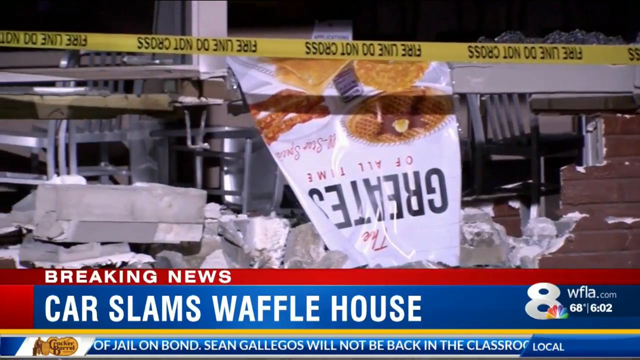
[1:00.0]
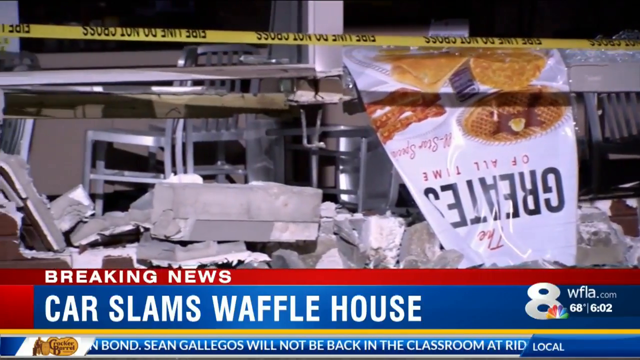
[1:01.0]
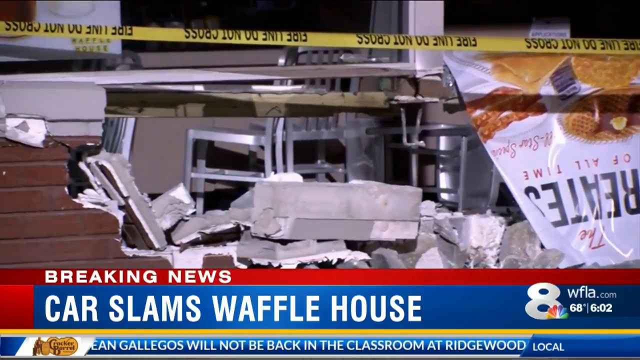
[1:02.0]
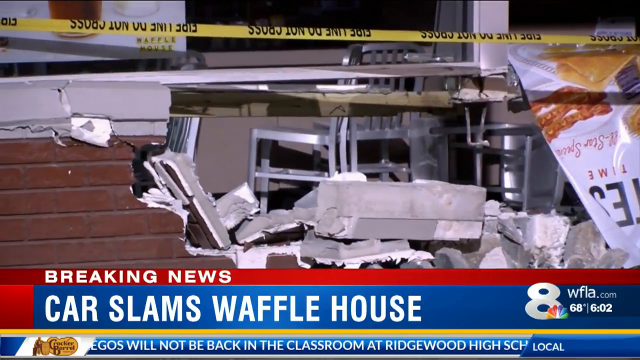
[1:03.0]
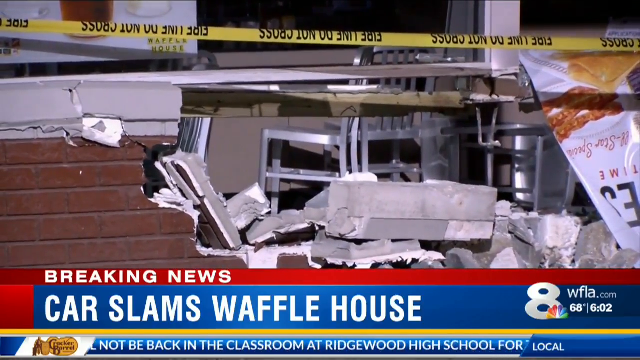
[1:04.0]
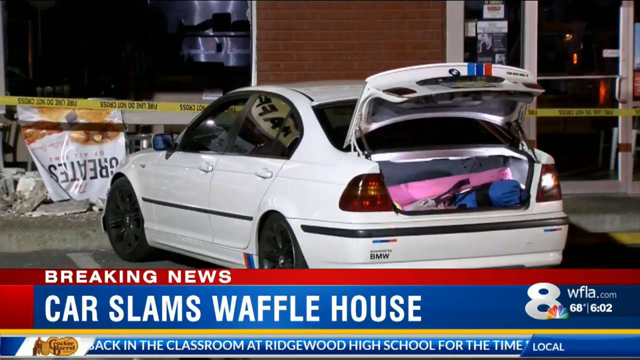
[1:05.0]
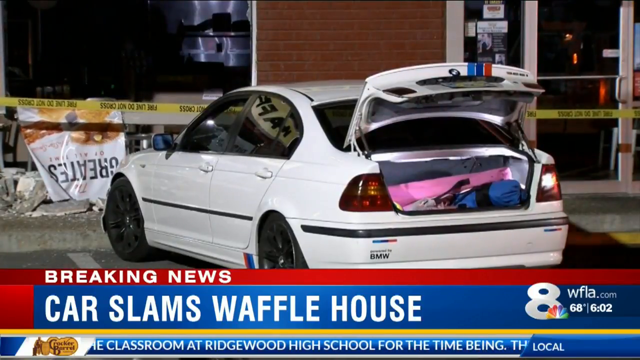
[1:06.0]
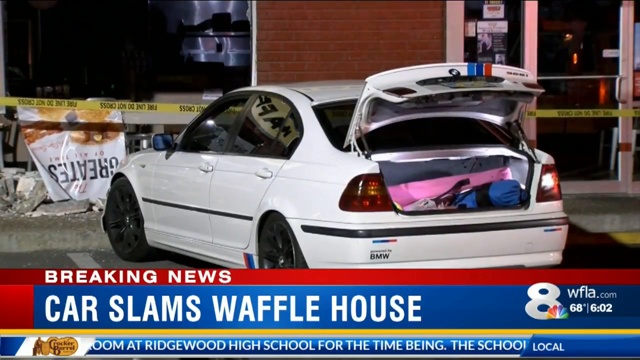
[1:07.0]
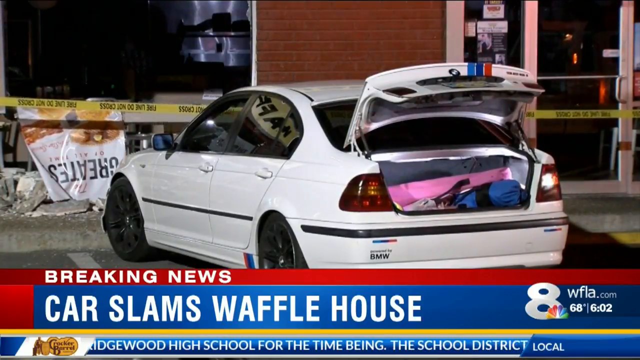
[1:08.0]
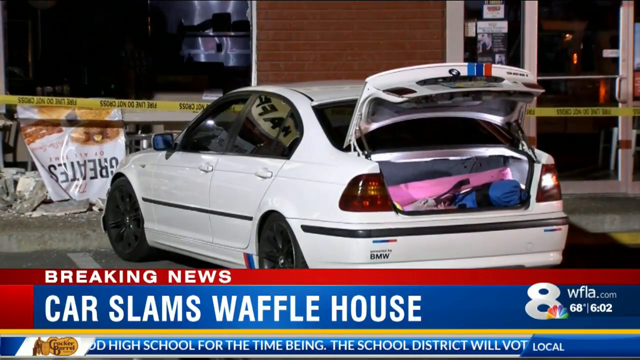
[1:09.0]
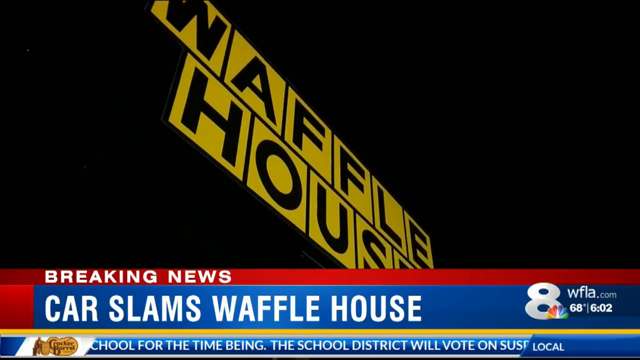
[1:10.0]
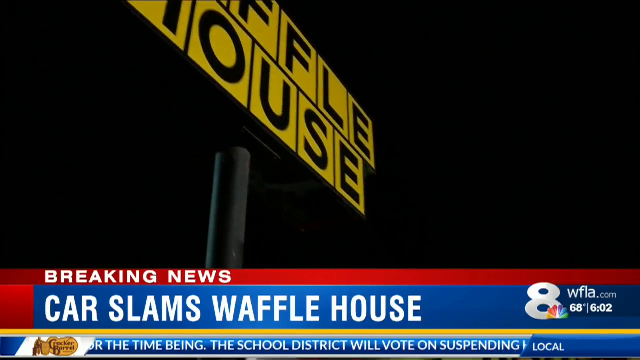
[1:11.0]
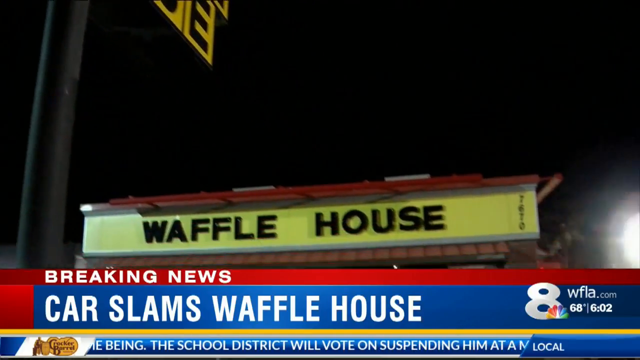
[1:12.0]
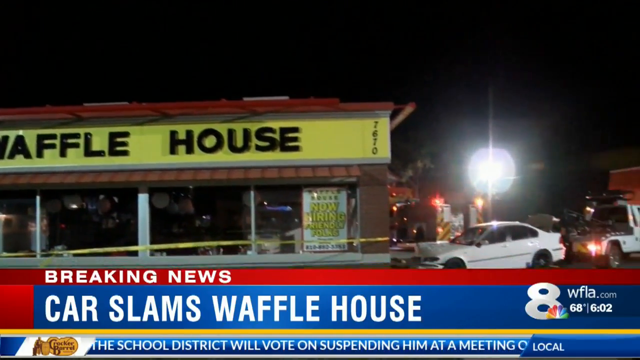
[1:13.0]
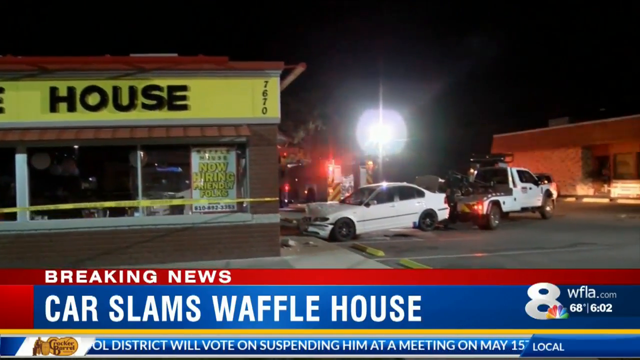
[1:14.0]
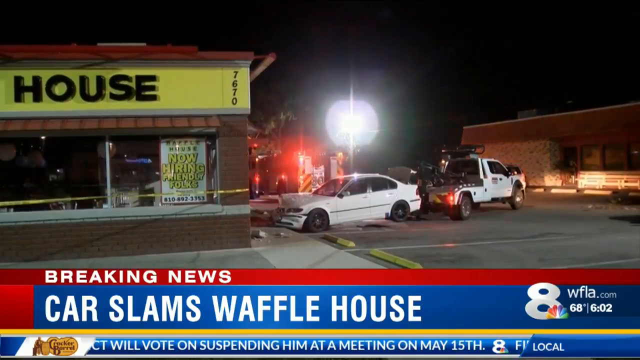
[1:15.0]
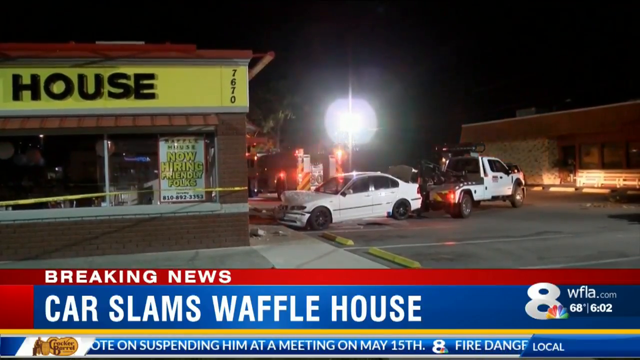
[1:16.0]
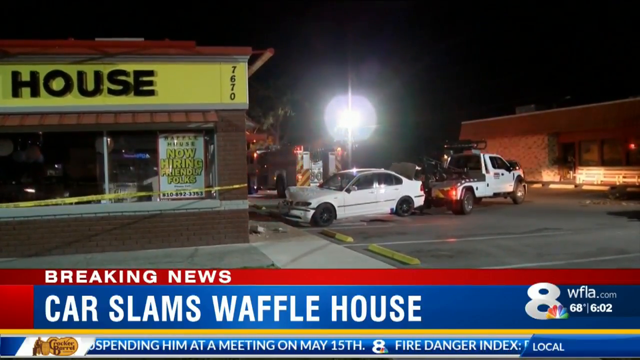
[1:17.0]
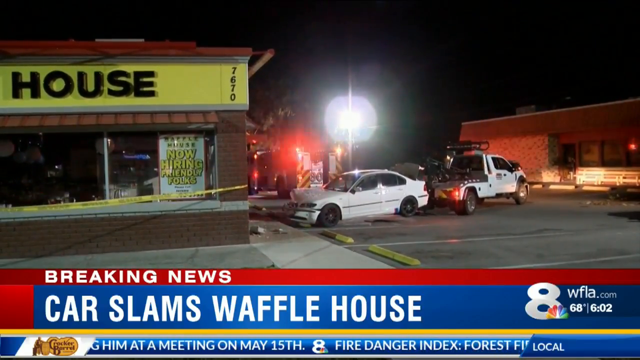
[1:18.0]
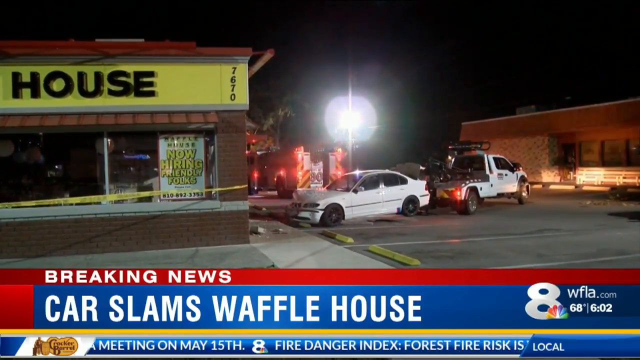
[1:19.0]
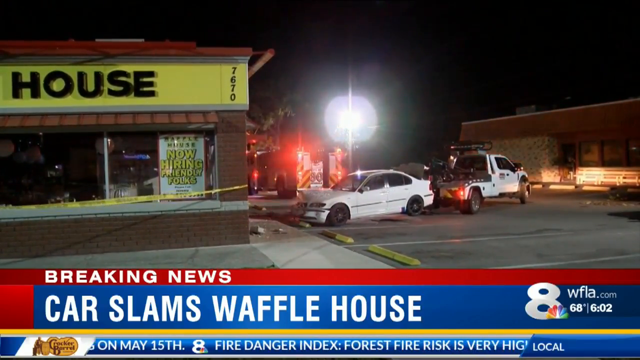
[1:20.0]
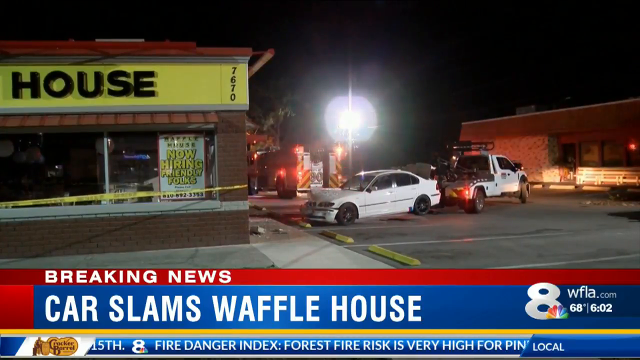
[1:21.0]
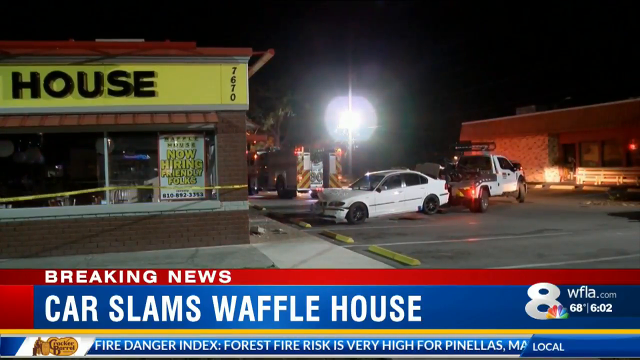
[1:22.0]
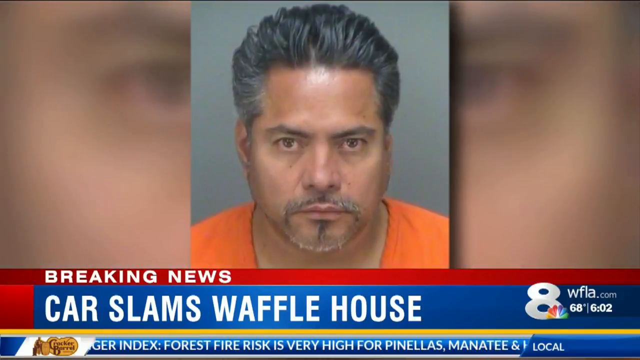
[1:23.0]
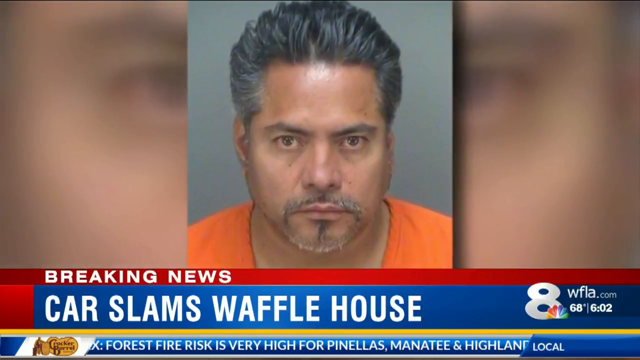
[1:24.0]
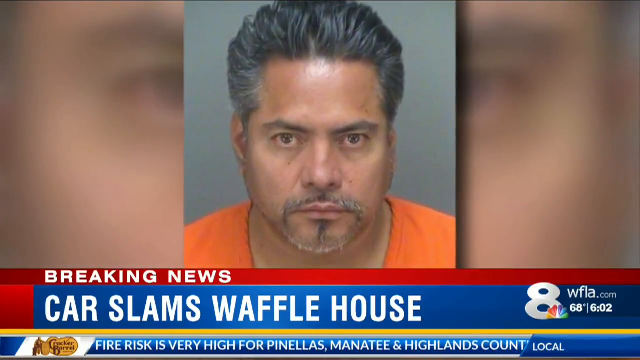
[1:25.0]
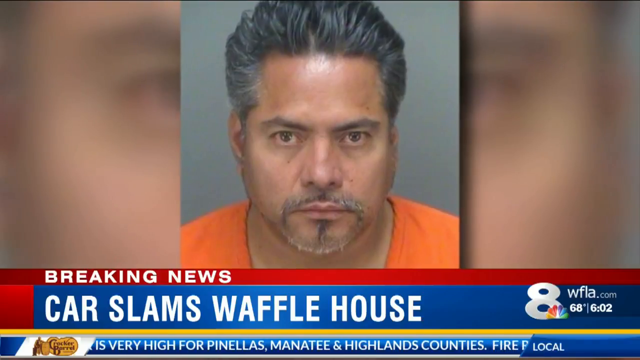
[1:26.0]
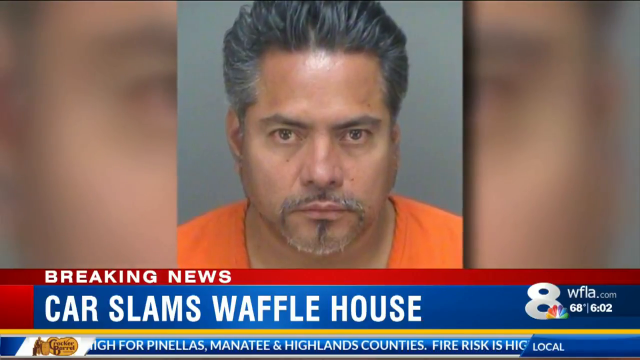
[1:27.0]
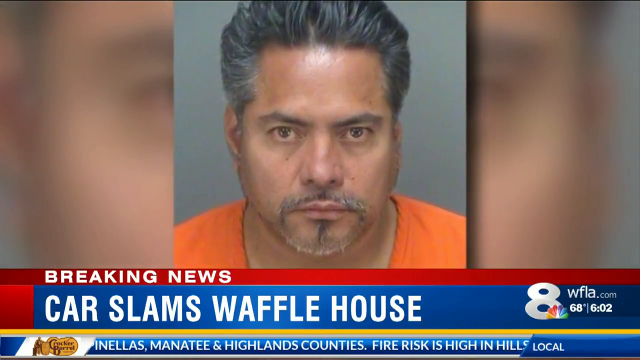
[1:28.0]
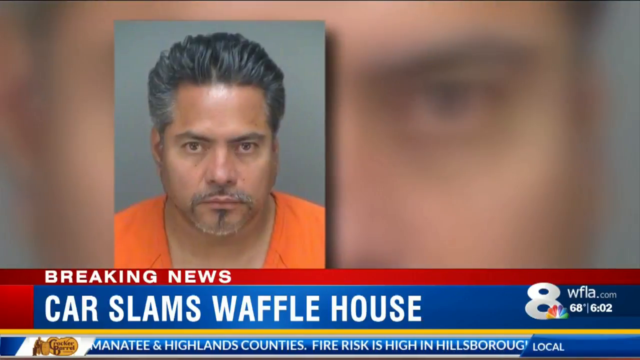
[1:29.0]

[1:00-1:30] The cleanup of the damaged Waffle House wall continues. Something pink is opened, possibly a children's item. The face of the suspect is then revealed: he looks like an Indian man in his late 40s to early 50s, wears an orange t-shirt, and looks straight into the camera. The building's walls are made of strong brown bricks. A light is flashing, and from a distance the police seem to still be searching for something.